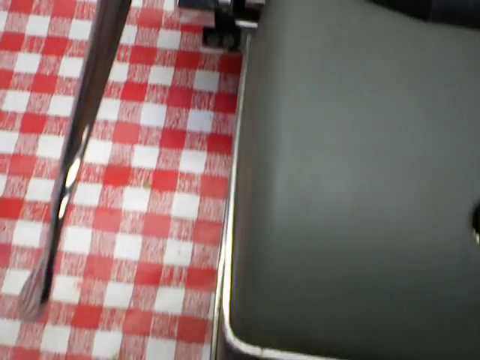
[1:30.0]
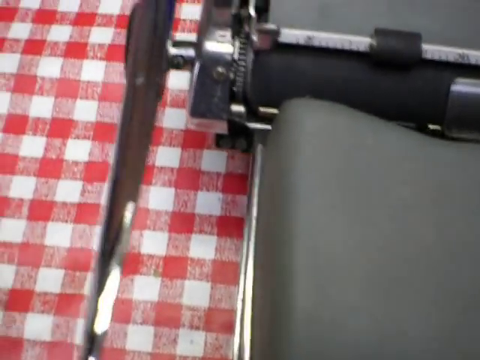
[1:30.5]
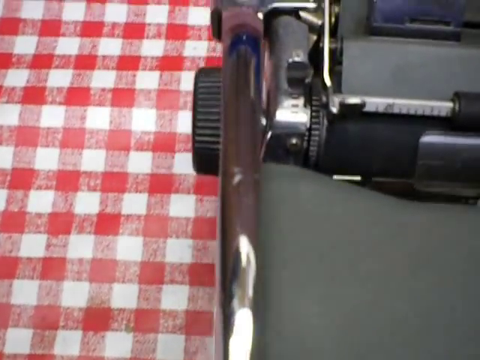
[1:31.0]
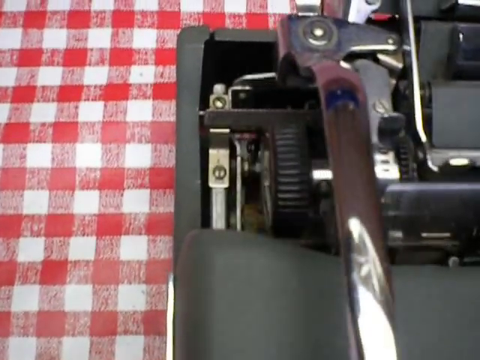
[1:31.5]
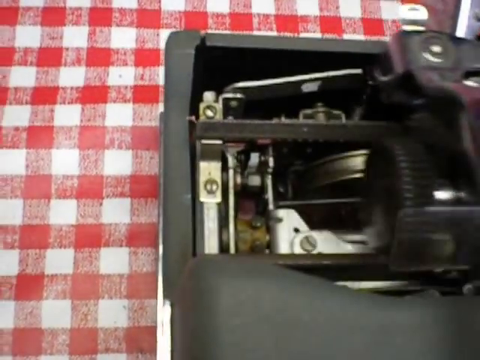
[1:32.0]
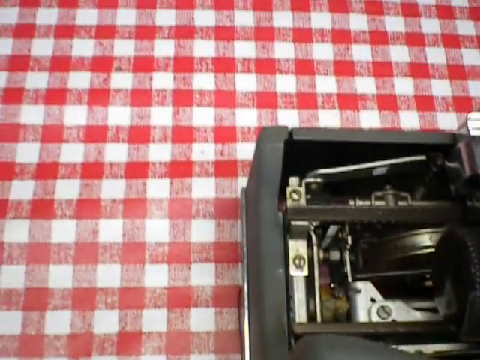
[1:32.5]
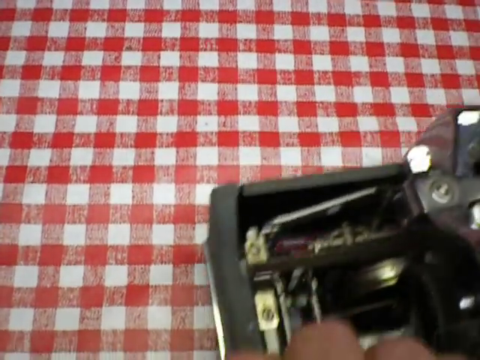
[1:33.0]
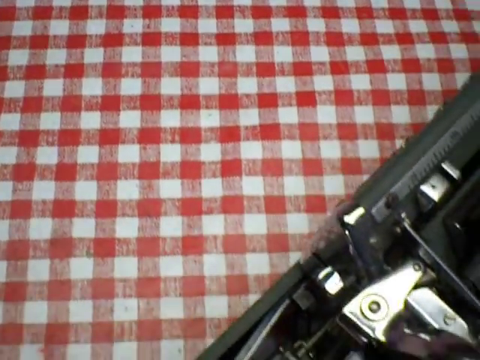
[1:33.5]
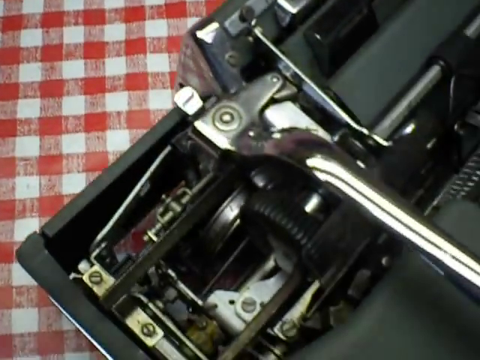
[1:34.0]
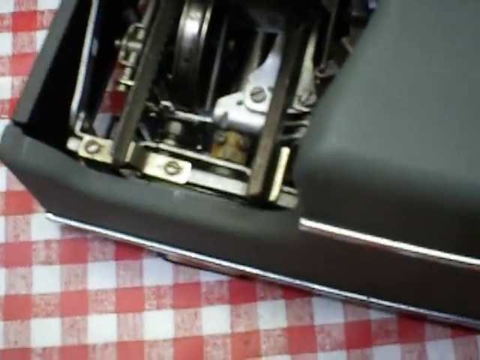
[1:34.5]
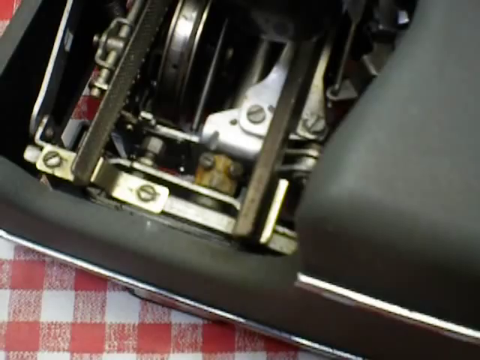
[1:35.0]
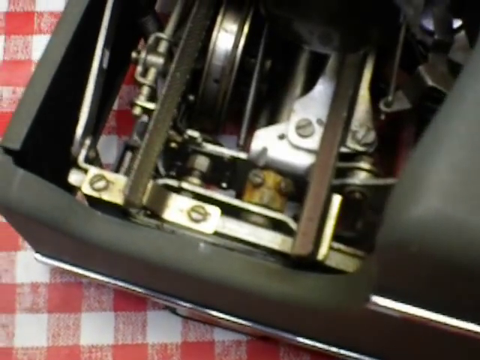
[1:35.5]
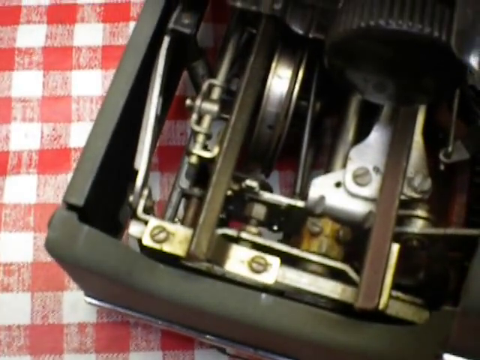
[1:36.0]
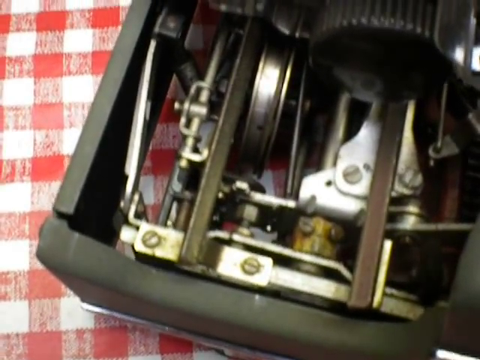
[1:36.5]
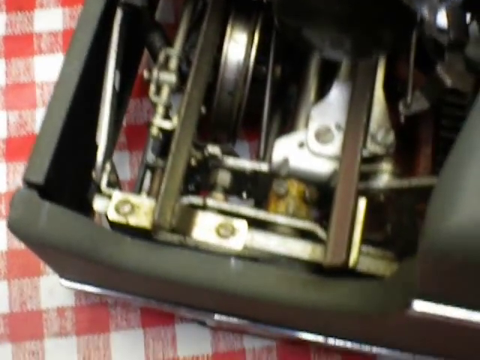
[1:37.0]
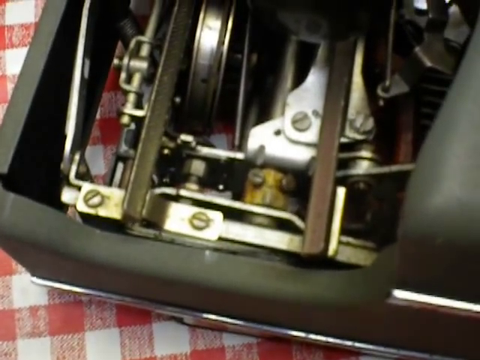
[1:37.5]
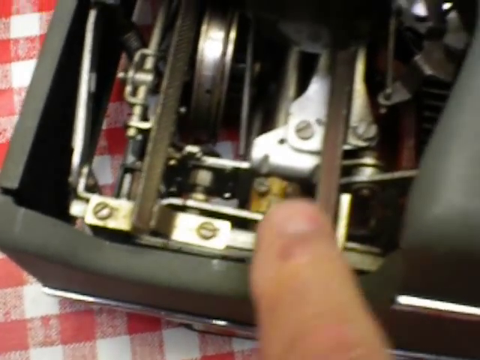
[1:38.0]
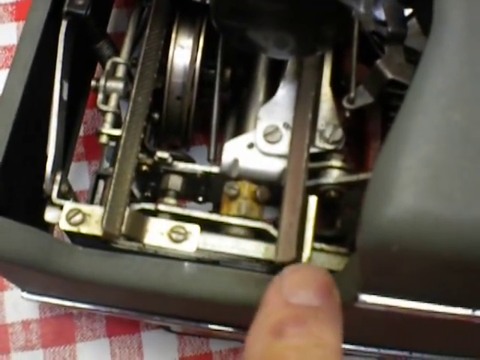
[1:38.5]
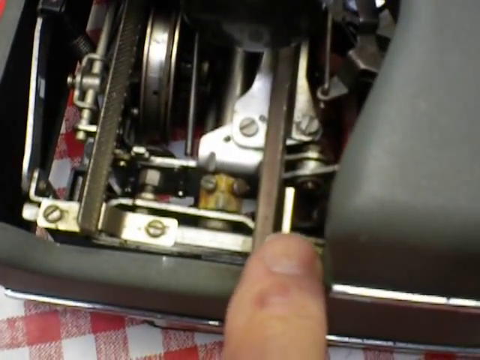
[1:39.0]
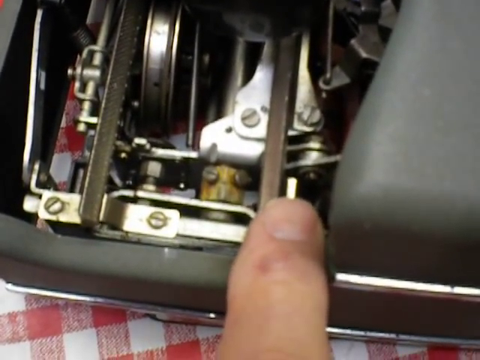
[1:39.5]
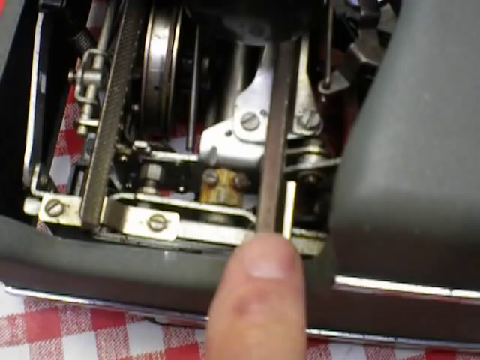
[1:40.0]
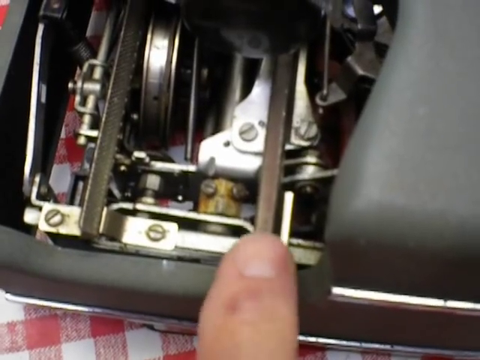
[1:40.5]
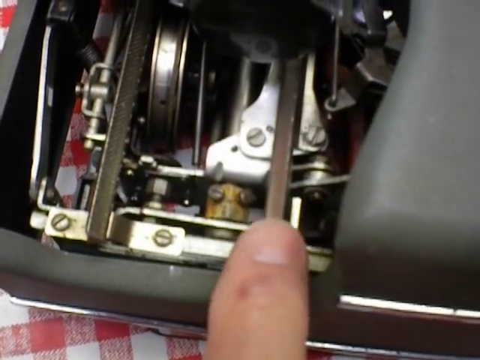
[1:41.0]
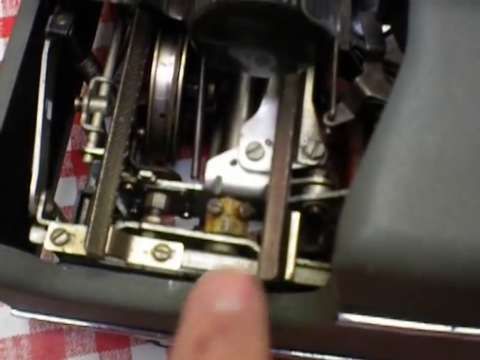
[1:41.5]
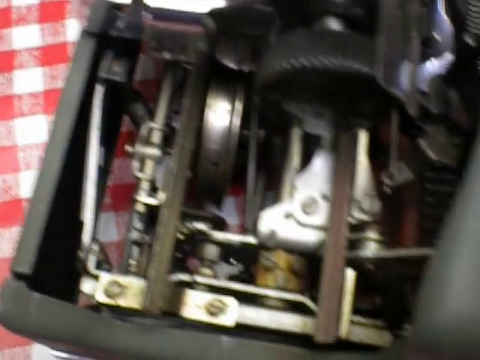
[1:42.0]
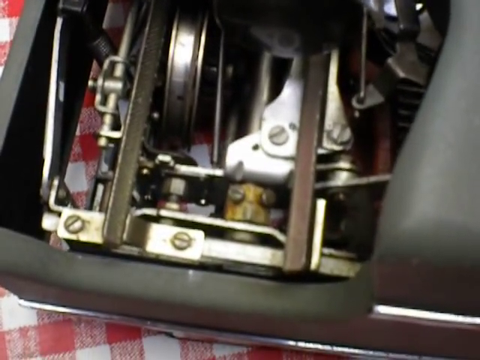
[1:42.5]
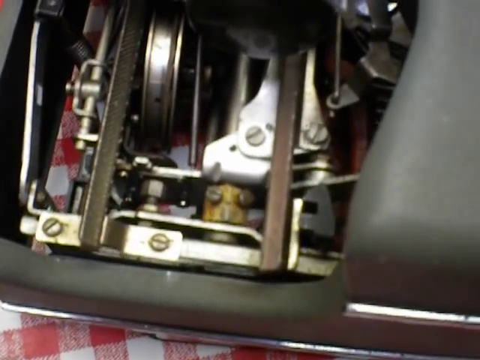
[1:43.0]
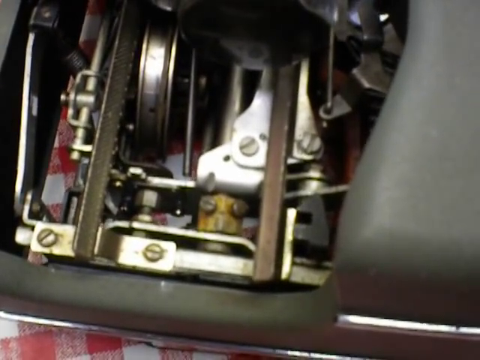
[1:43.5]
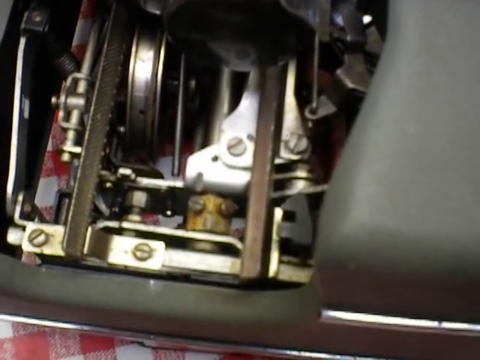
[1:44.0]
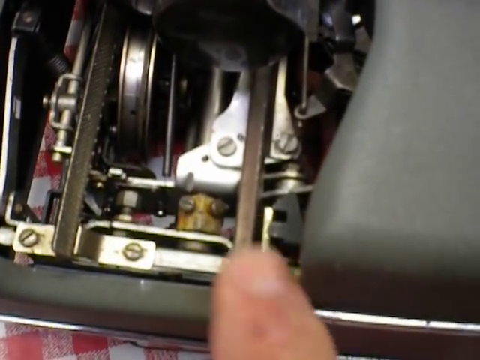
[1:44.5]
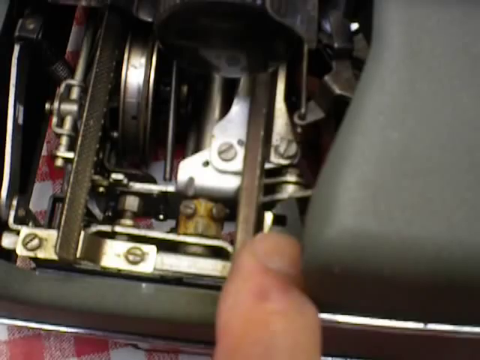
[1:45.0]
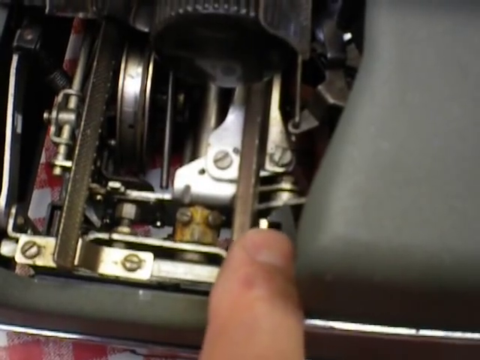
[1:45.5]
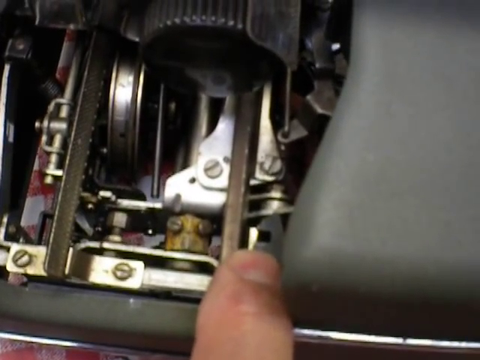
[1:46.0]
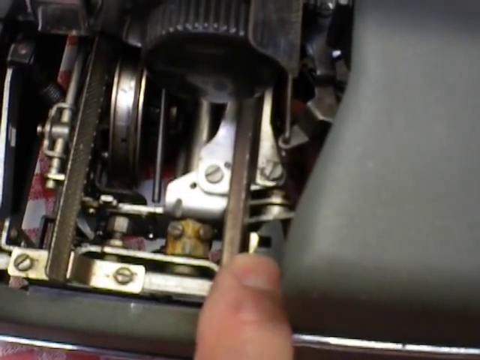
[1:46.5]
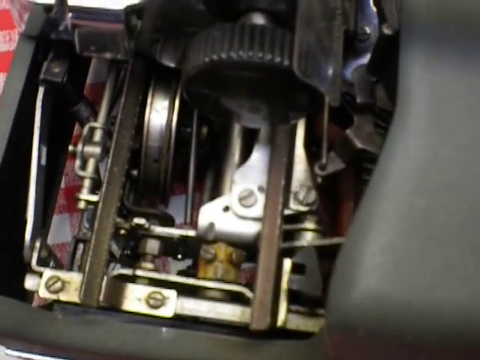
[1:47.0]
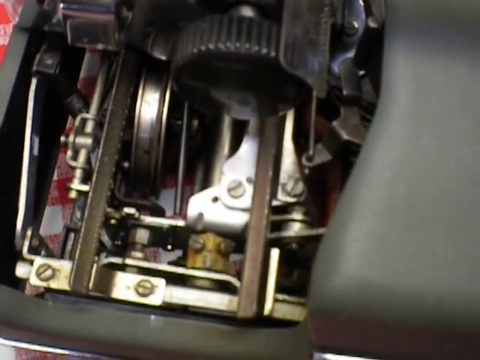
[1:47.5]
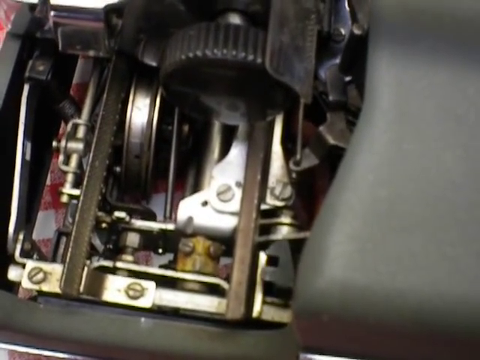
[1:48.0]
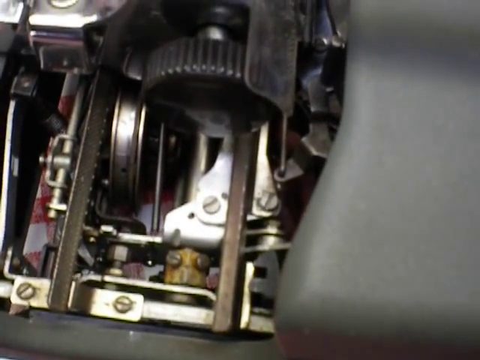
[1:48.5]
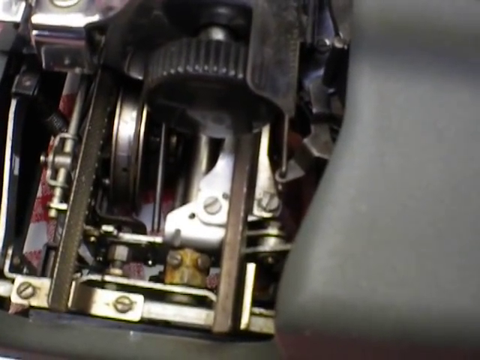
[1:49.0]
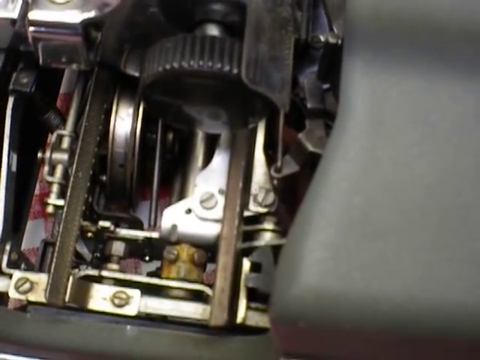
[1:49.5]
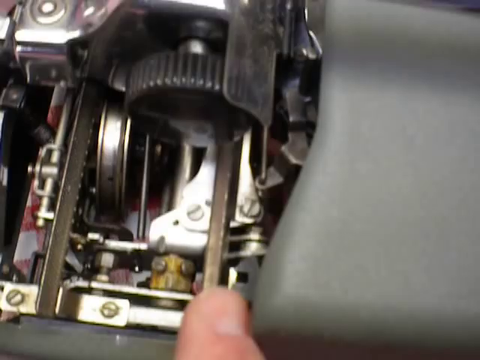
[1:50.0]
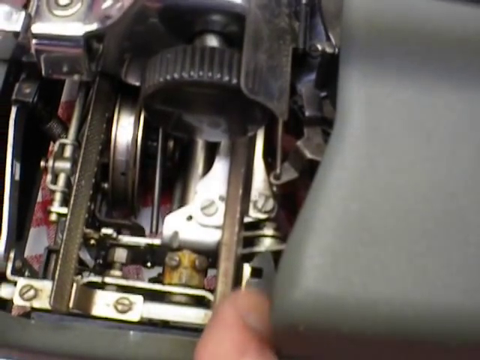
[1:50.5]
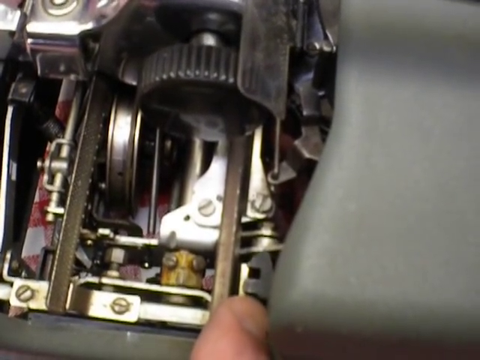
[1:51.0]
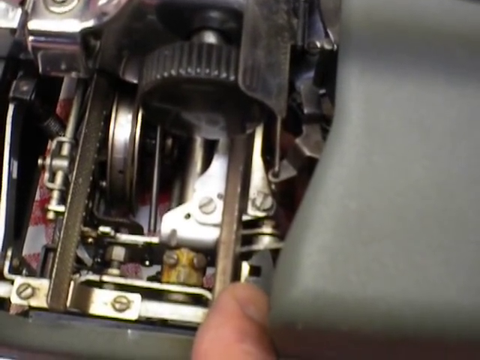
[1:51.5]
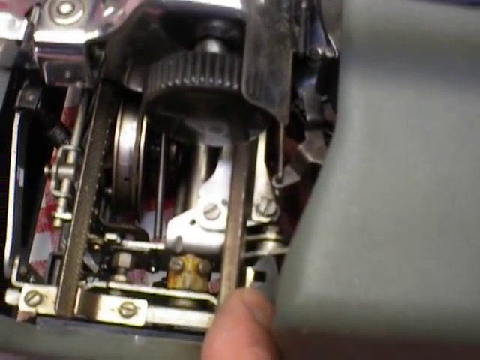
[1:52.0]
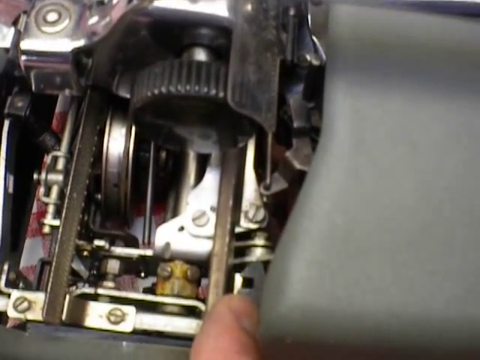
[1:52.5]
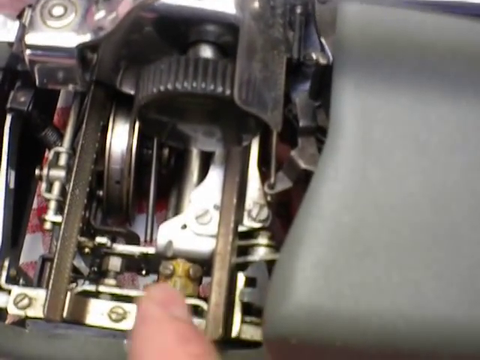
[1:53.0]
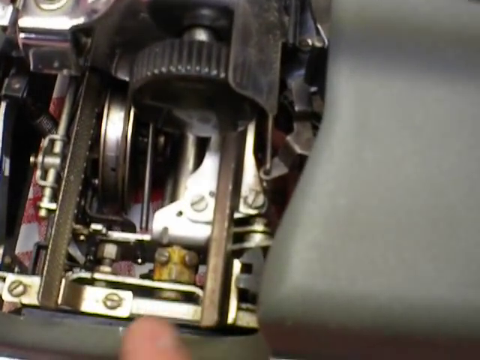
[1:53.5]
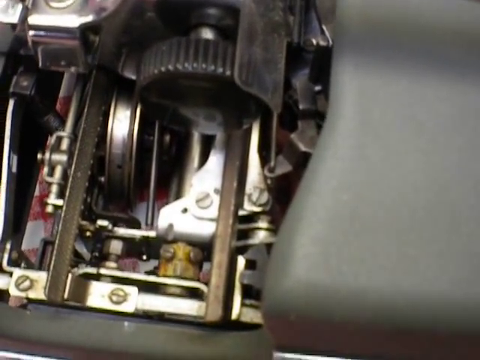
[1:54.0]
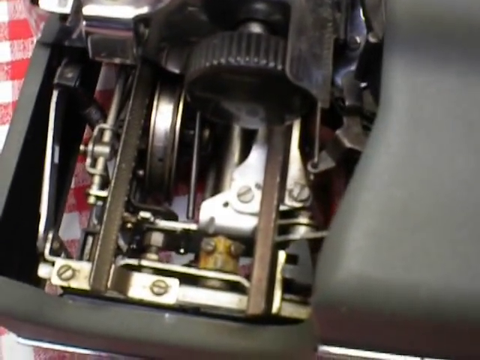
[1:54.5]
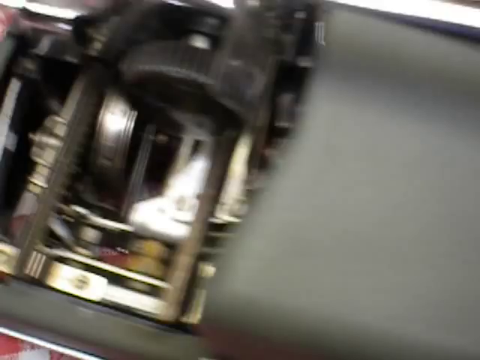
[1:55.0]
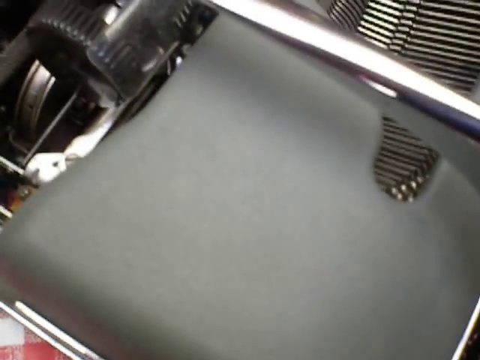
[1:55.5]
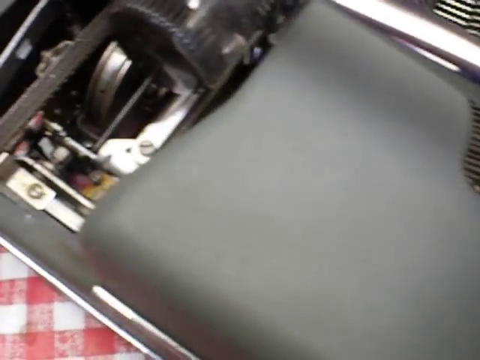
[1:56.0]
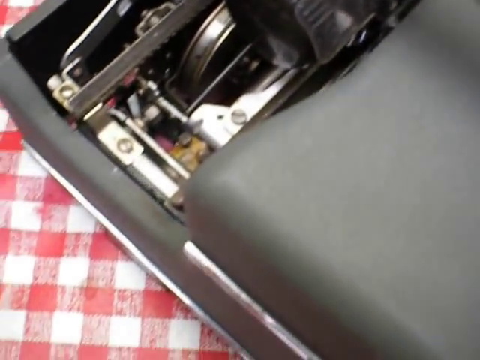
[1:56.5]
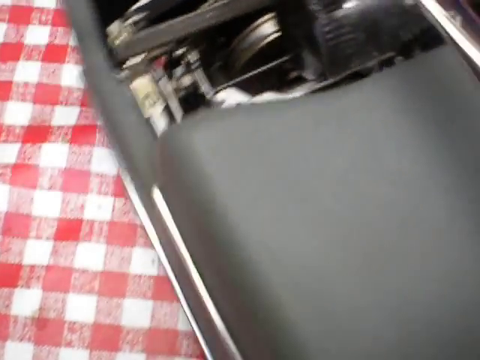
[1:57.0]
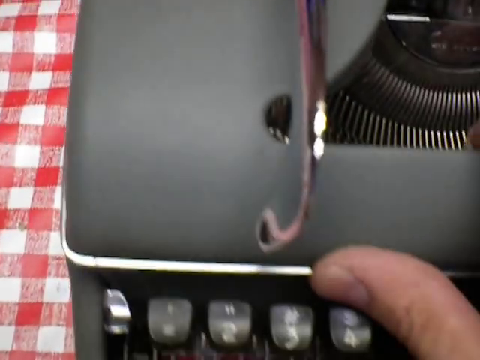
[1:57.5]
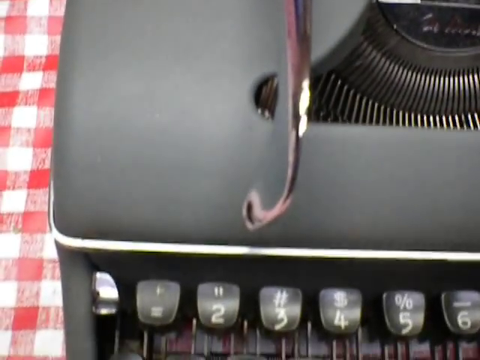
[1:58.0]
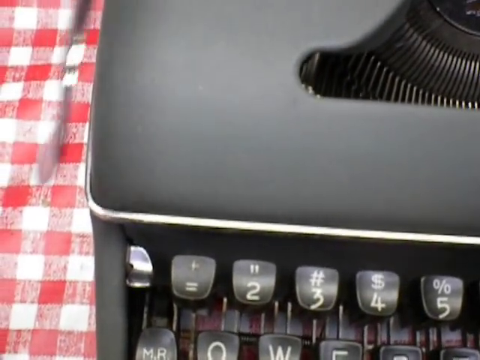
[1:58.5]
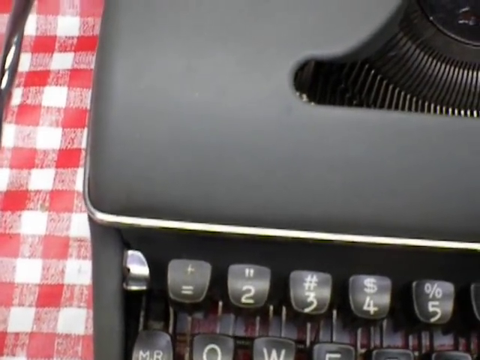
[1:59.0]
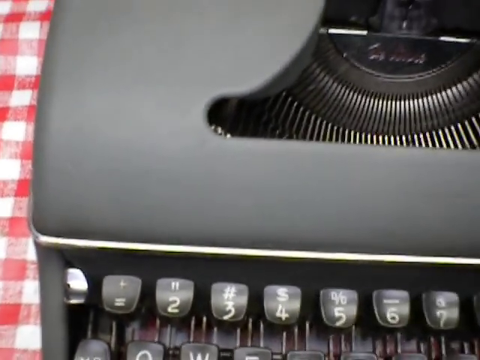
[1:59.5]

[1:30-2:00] The left corner of a typewriter is shown on a table covered with a tablecloth in a small red and white checked pattern. The cylinder at the top moves to the right side, exposing some of the inner workings underneath. A man's hand reaches onto the typewriter and turns it sideways, giving a close-up view of the upper left-hand corner inside, under the cylinder. His finger, white with a short fingernail, points several times to a small metal piece inside the typewriter; the piece then moves up and down as the finger points to the area again. The hand grabs the top left corner of the typewriter and turns it back to its original position.